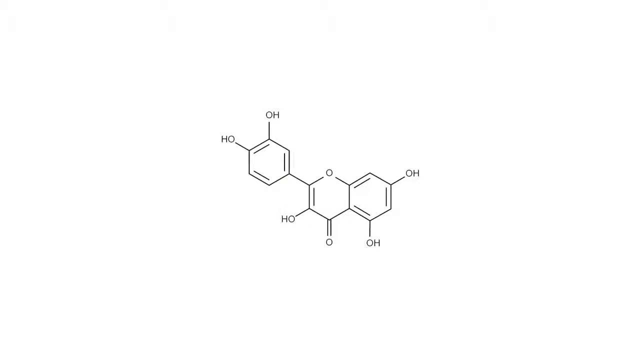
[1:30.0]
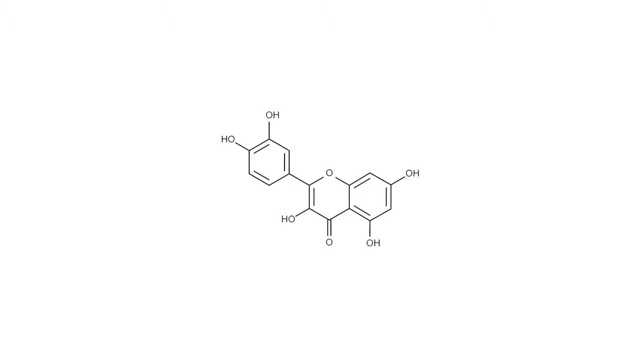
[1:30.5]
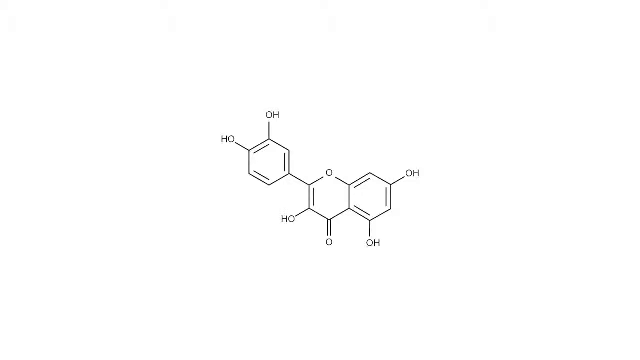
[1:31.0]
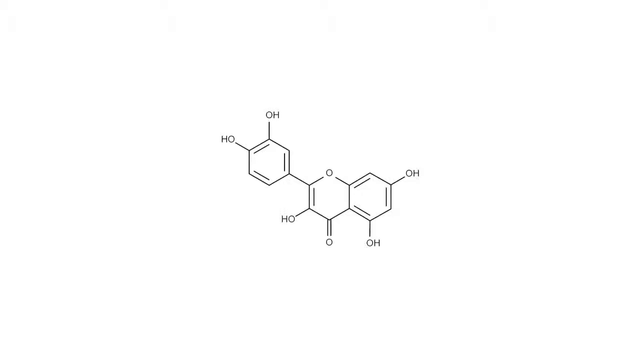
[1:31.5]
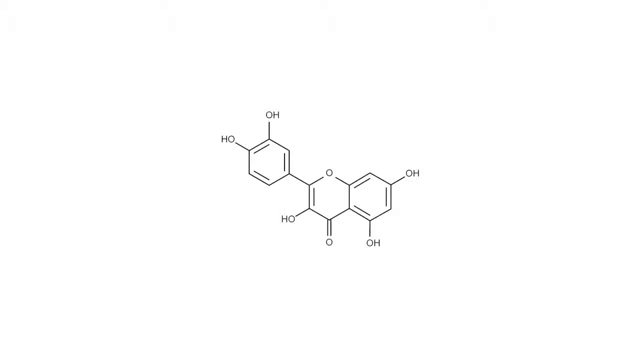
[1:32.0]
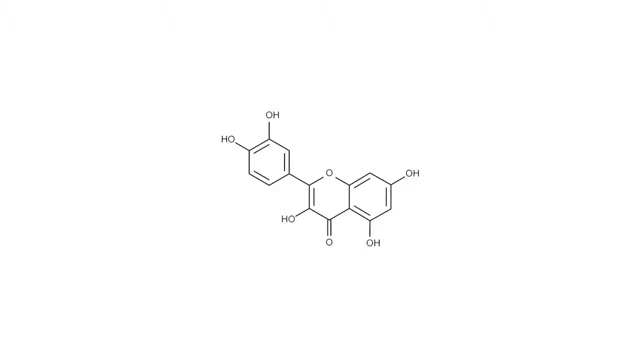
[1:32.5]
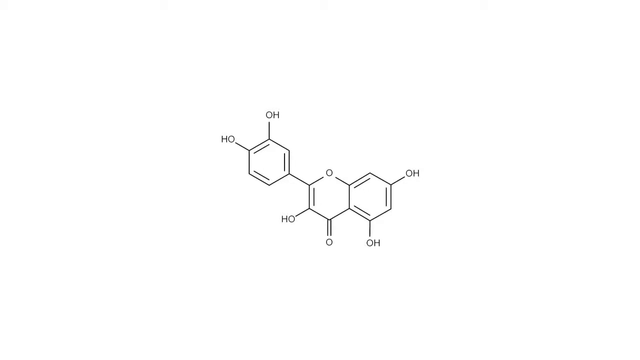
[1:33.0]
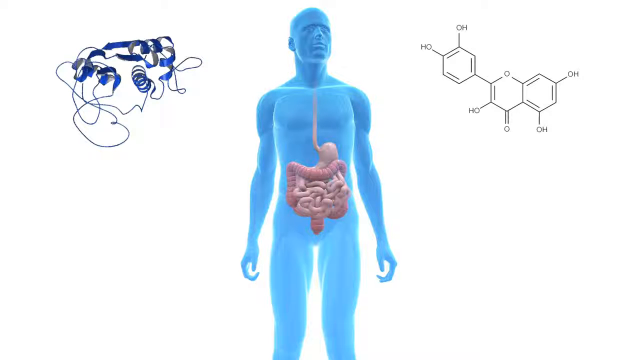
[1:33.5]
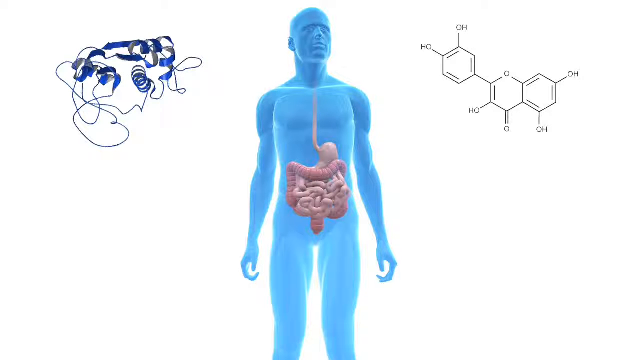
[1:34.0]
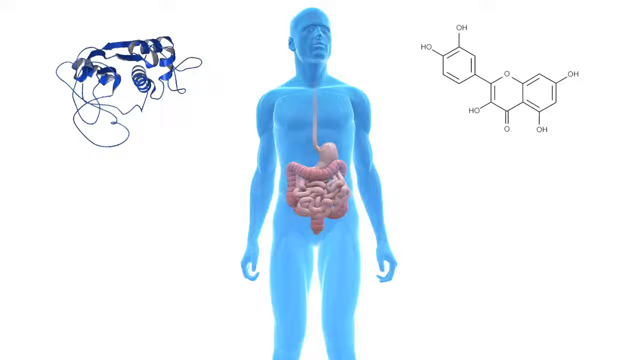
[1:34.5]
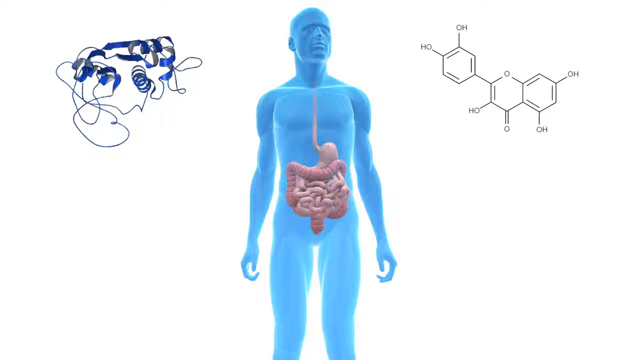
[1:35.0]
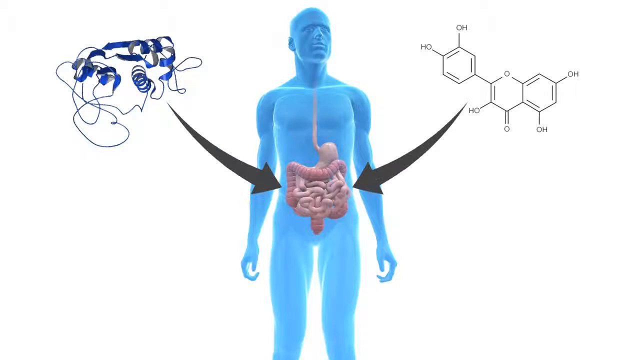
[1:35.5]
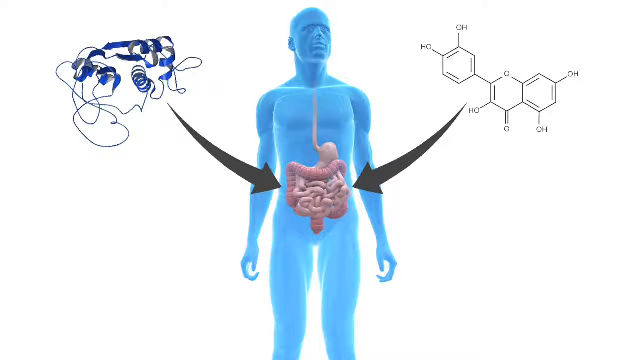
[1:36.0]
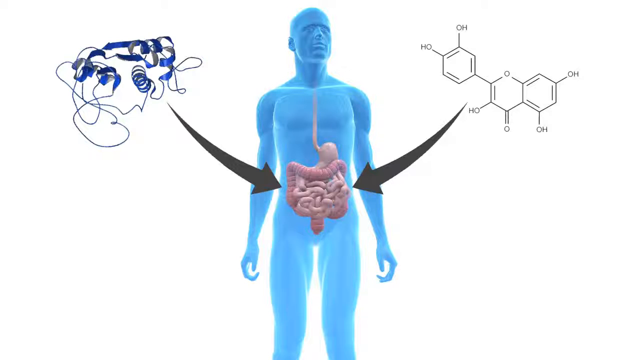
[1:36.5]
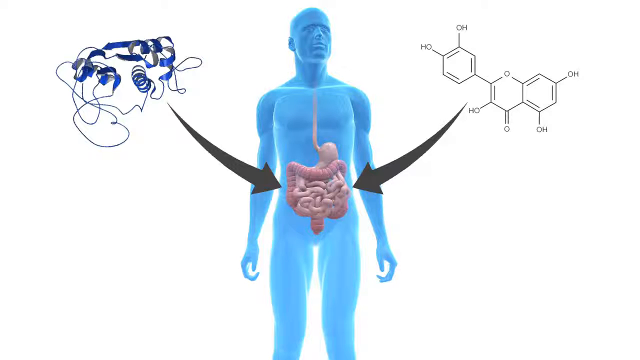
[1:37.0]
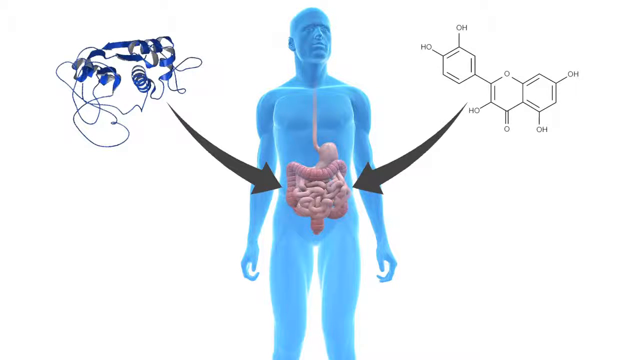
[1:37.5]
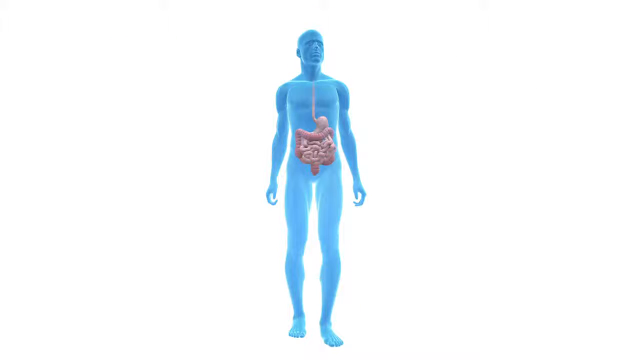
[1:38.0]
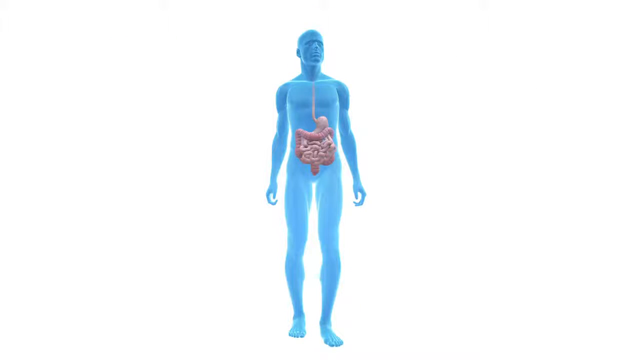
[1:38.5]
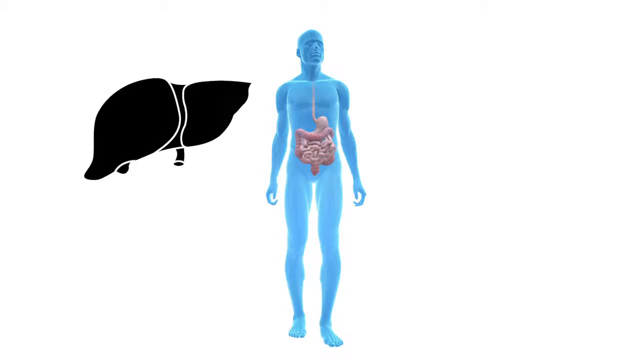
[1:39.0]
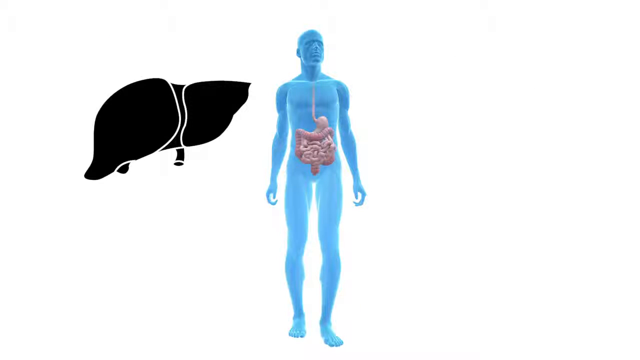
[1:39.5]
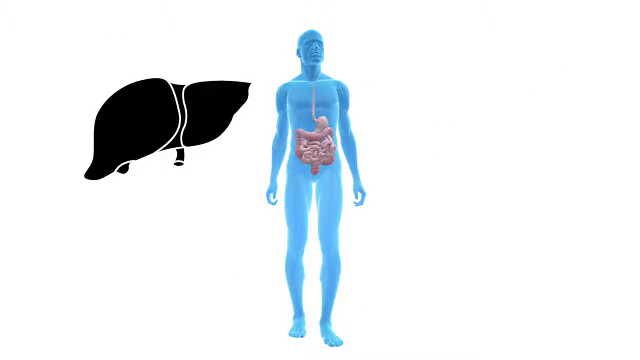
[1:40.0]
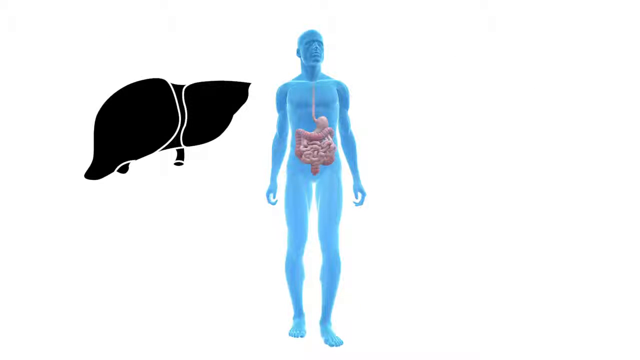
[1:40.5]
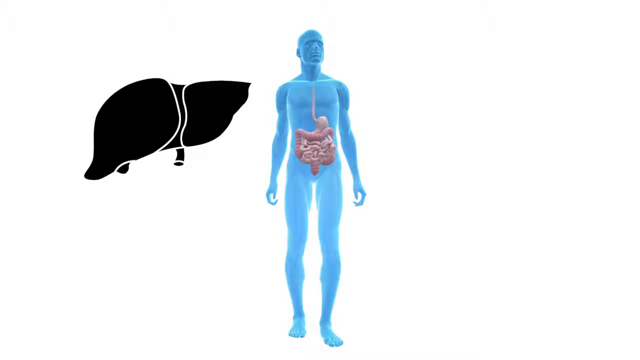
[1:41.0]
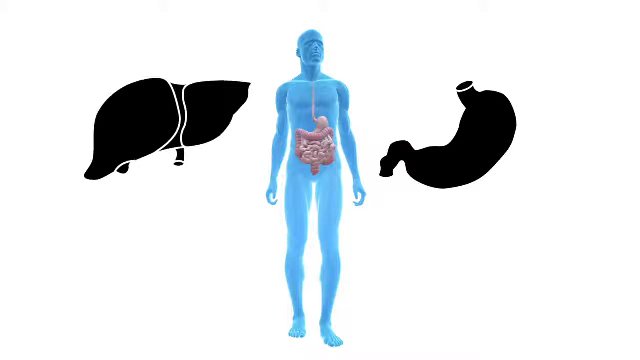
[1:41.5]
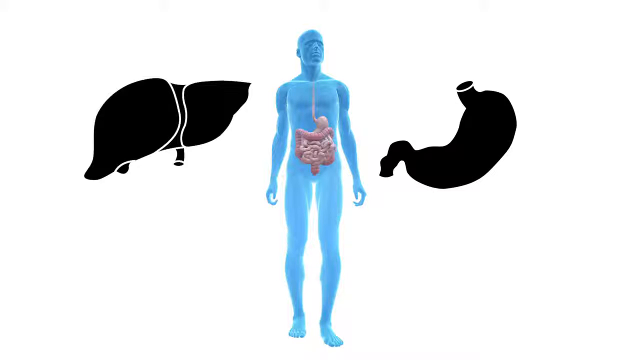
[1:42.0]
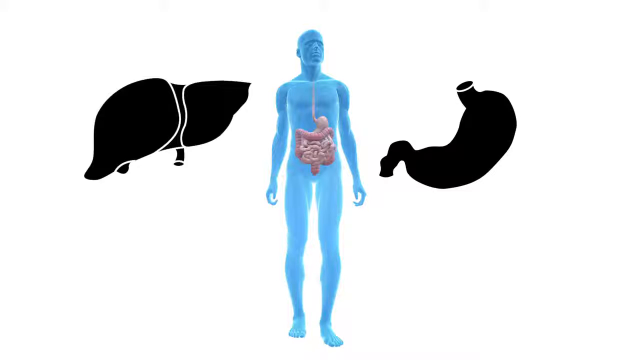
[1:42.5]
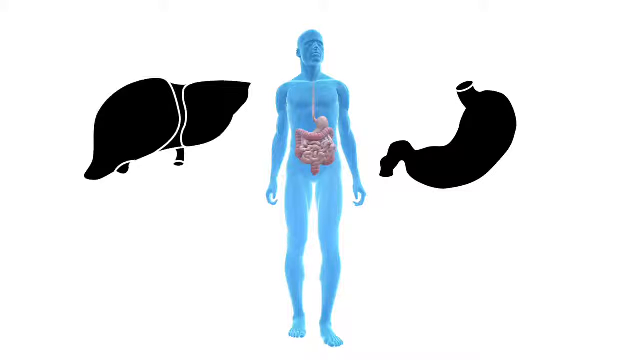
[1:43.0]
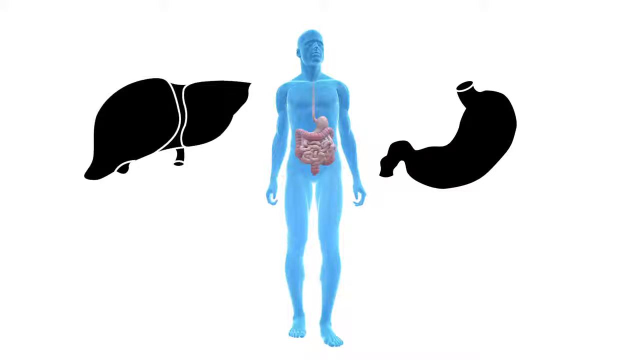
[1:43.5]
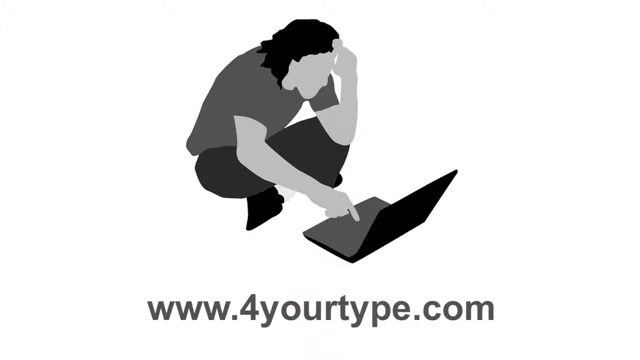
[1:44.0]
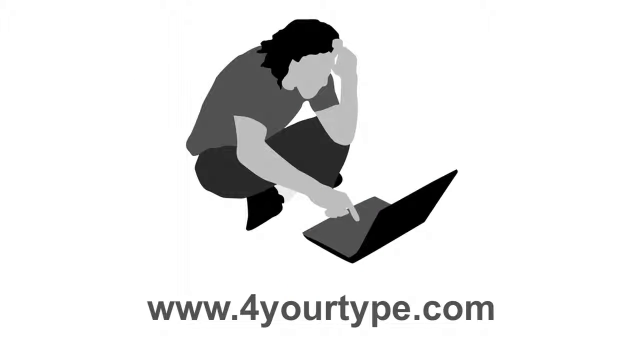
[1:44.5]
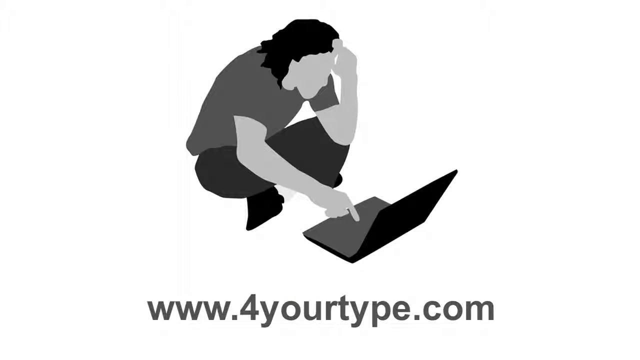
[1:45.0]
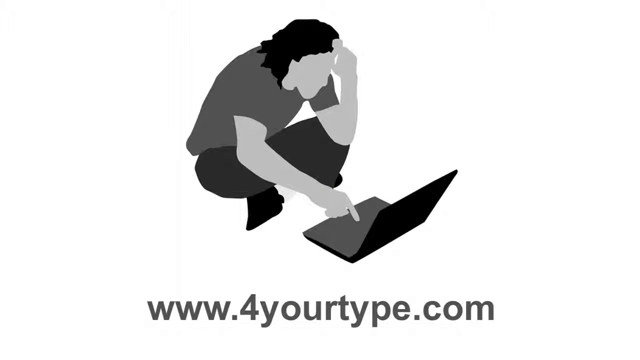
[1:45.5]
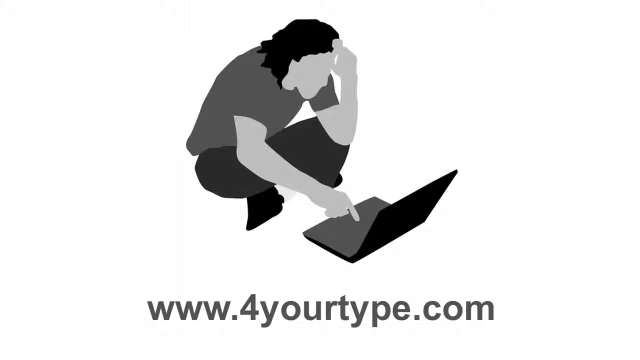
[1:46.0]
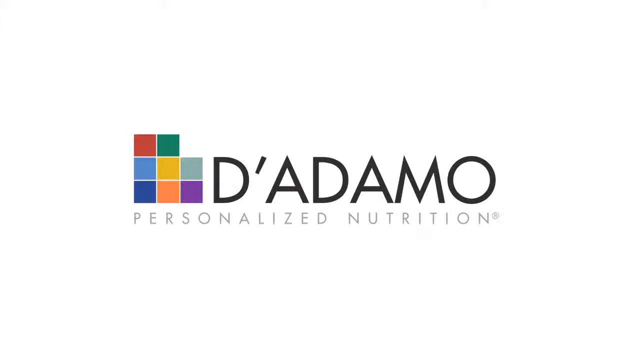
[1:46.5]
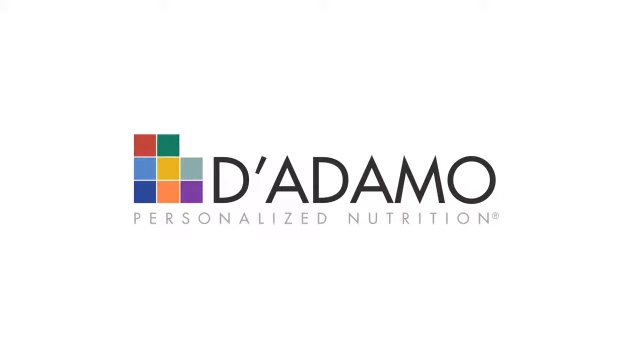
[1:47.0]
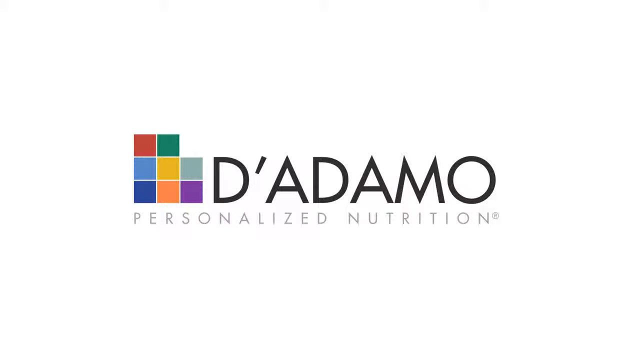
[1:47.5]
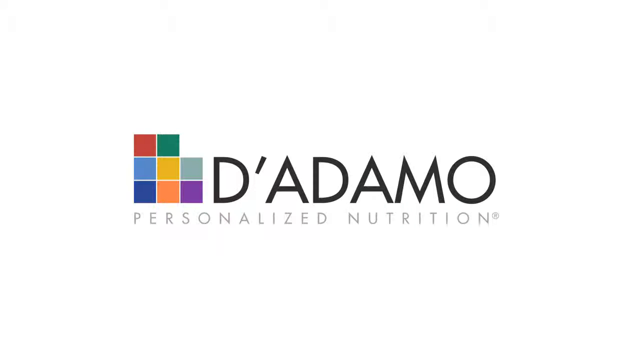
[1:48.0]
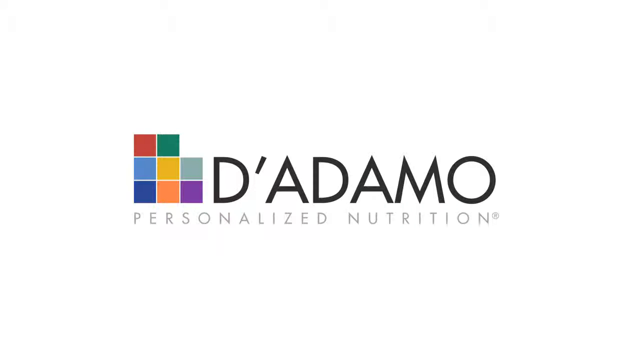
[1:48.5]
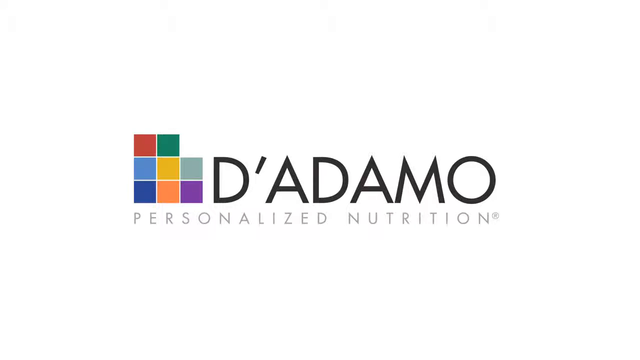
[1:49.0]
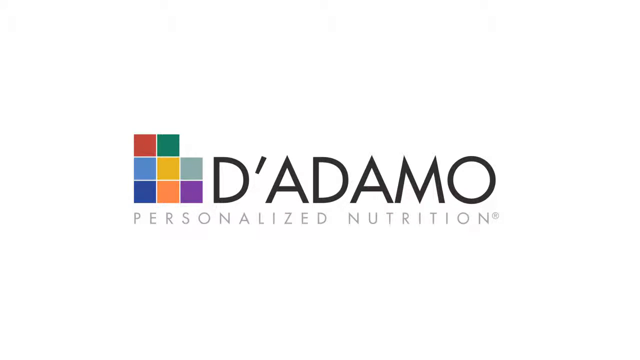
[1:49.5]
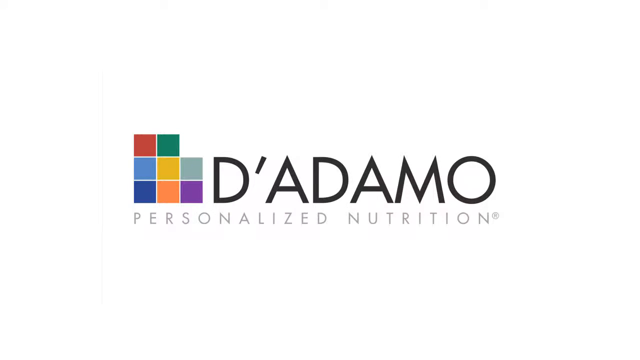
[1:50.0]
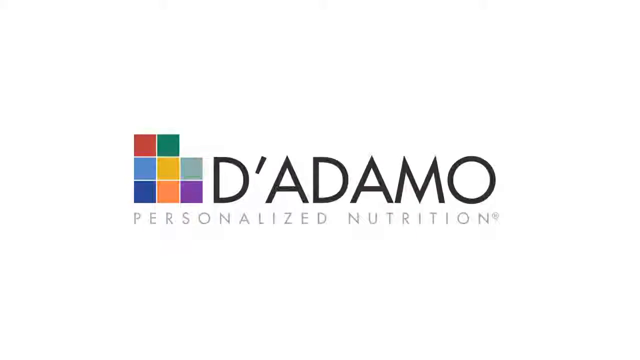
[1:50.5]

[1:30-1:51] A drawing that looks like a squiggle and ribbon in blue and grey appears on a white background. It changes to a chemical symbol of turmeric, shown as a diagram. Next is an image of a man in blue, with the organs of his stomach and intestine visible inside. The blue and grey squiggle is on the left and the chemical diagram of the turmeric molecules is on the right, and arrows point from these directly to the man's stomach. The man is then shown standing, with a solid black image of a liver and possibly a spleen on the left of the screen and a solid image of a stomach on the right. Next is a black-and-white image of someone sitting cross-legged on the floor, looking at a computer screen, hunched forward, with the right arm outstretched and the index finger pointing at or pressing a button on the laptop, the head leaning on the left hand and the left elbow on the left knee. Underneath is the text "www.foryourtype.com". The screen then changes to white with the De Adamo Personalized Nutrition brand name and logo.